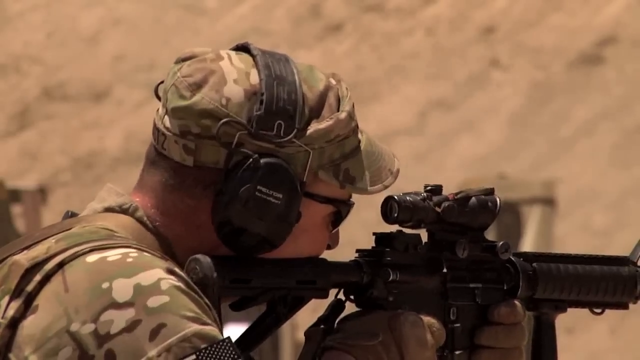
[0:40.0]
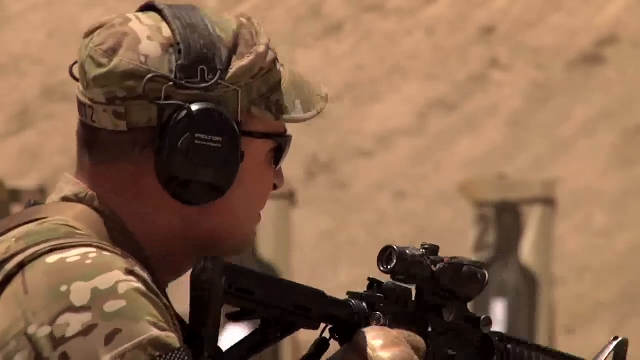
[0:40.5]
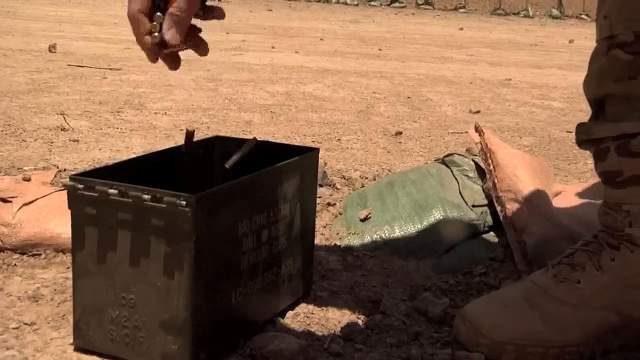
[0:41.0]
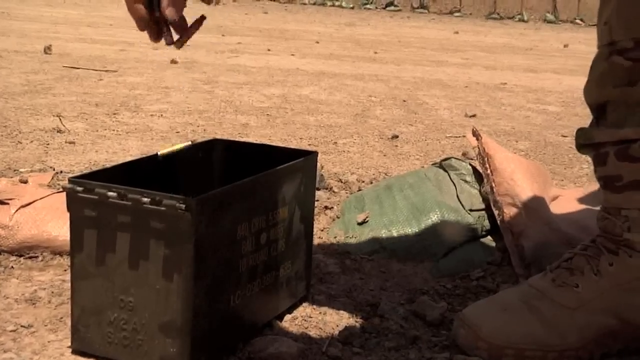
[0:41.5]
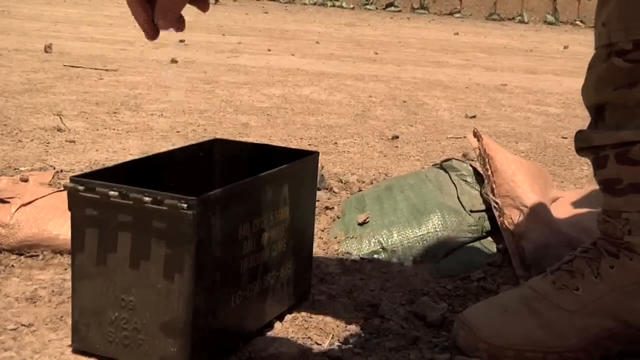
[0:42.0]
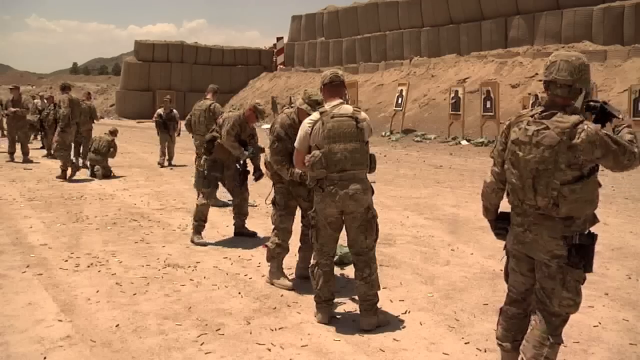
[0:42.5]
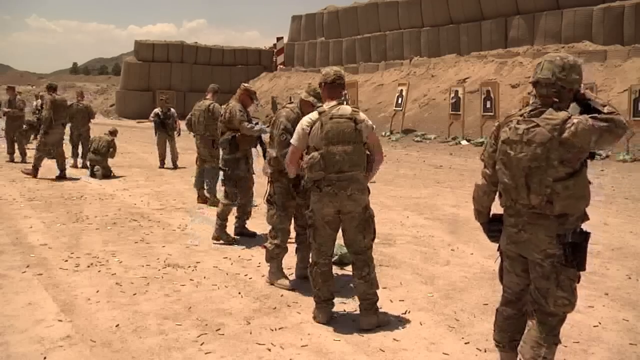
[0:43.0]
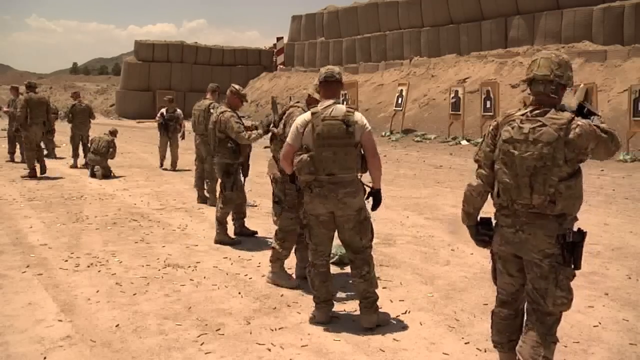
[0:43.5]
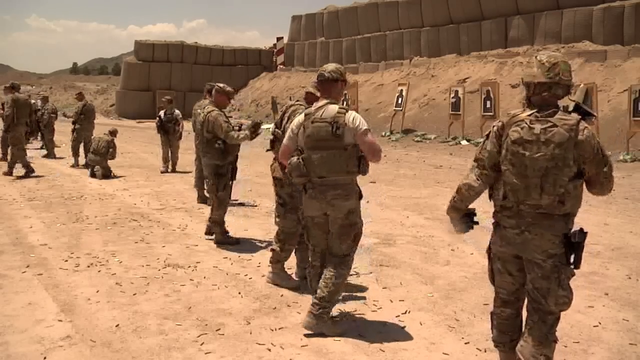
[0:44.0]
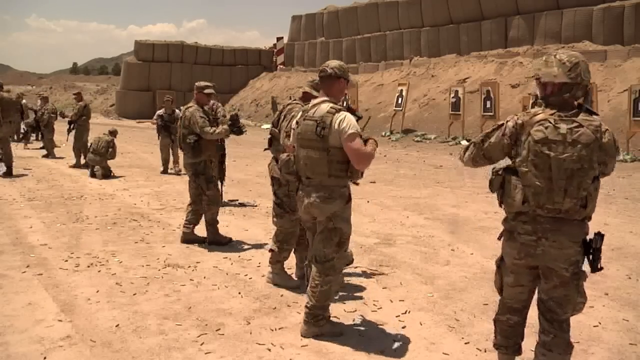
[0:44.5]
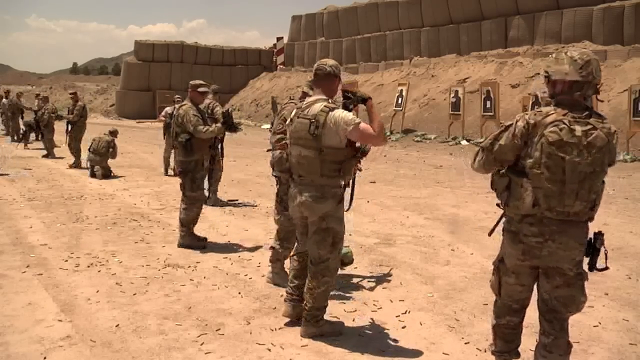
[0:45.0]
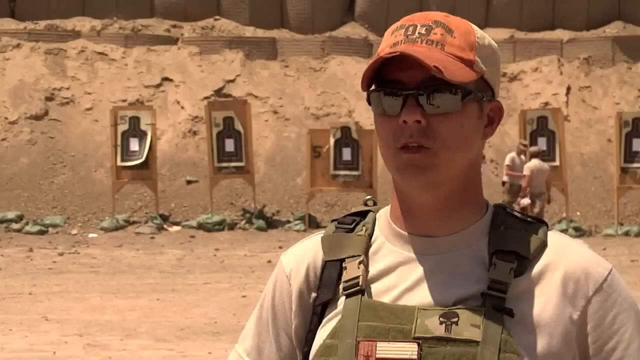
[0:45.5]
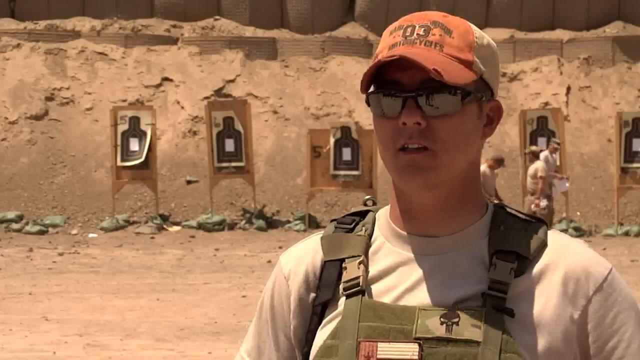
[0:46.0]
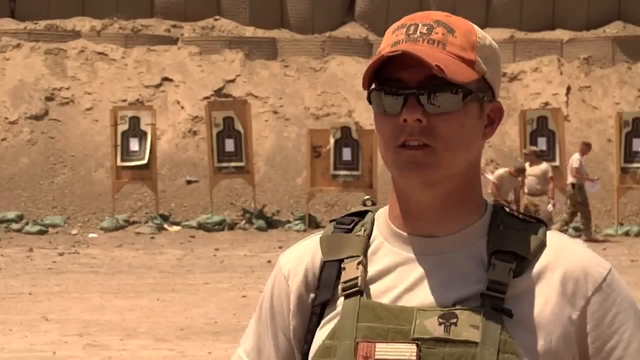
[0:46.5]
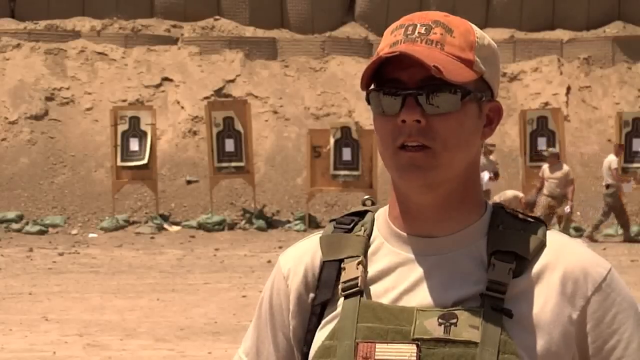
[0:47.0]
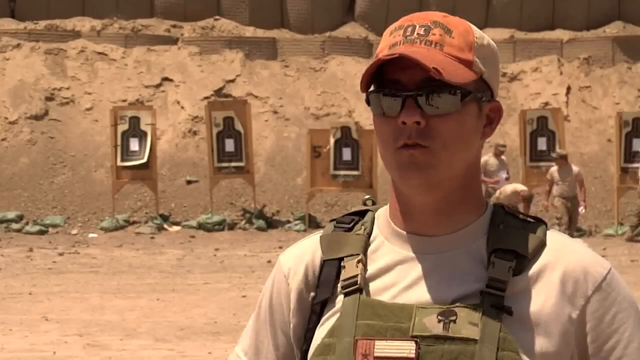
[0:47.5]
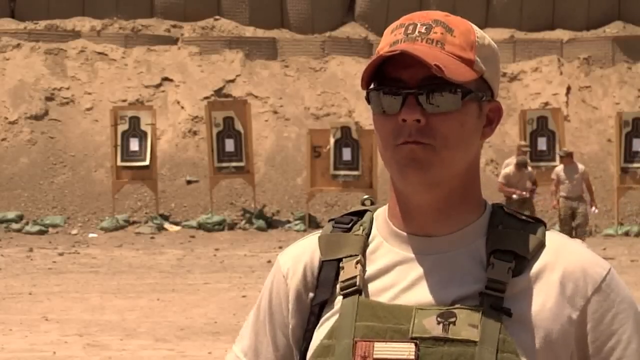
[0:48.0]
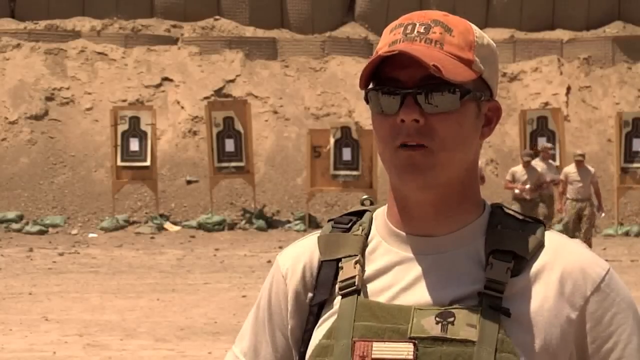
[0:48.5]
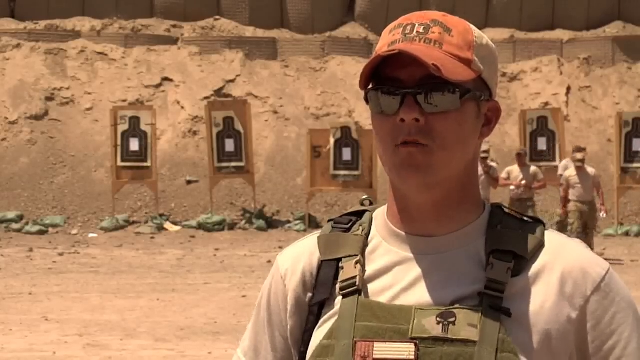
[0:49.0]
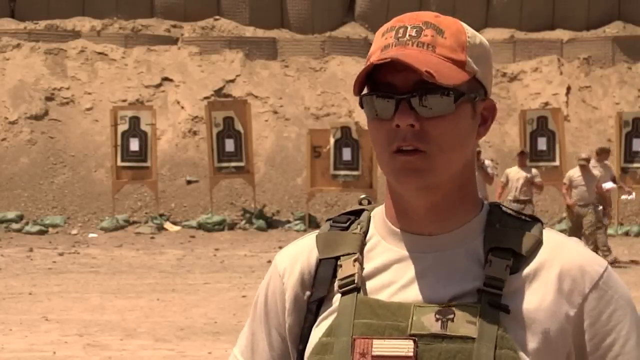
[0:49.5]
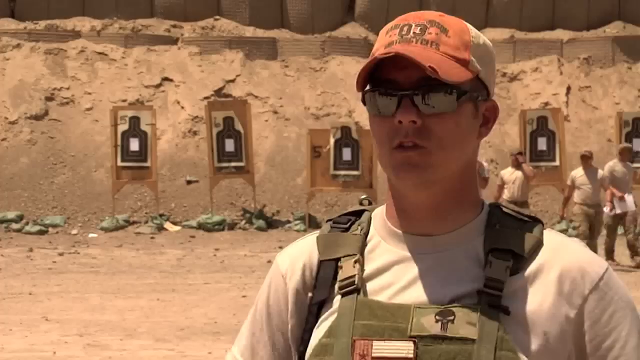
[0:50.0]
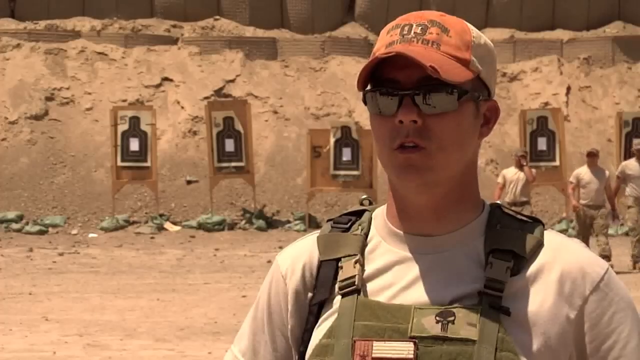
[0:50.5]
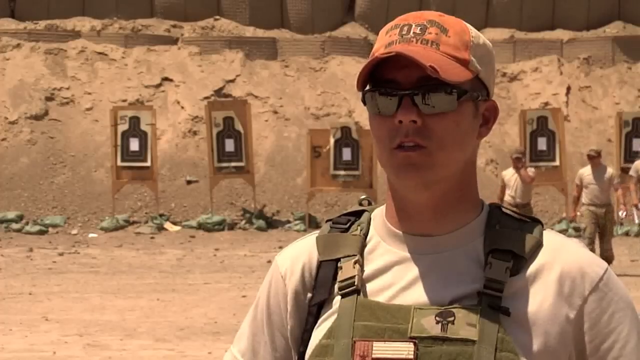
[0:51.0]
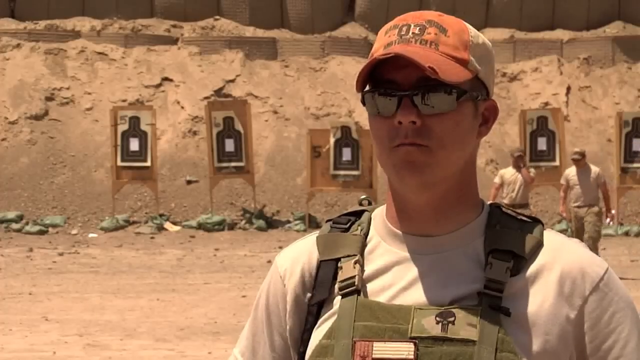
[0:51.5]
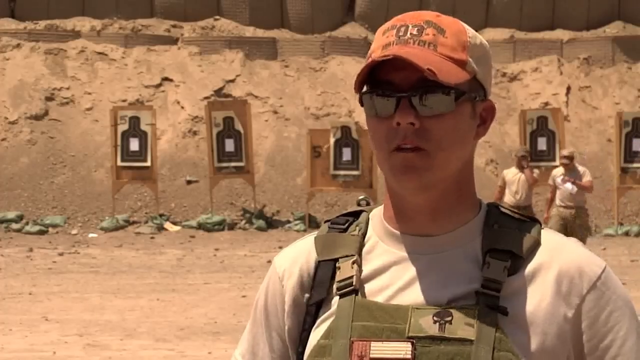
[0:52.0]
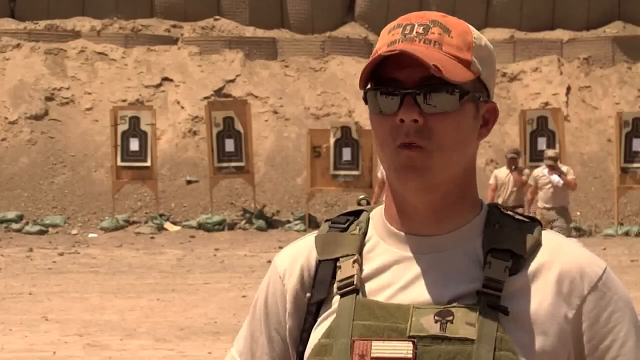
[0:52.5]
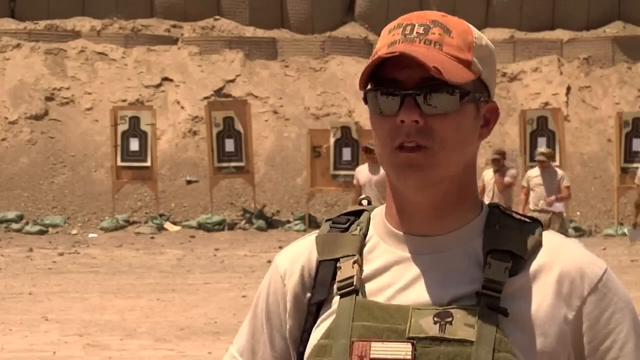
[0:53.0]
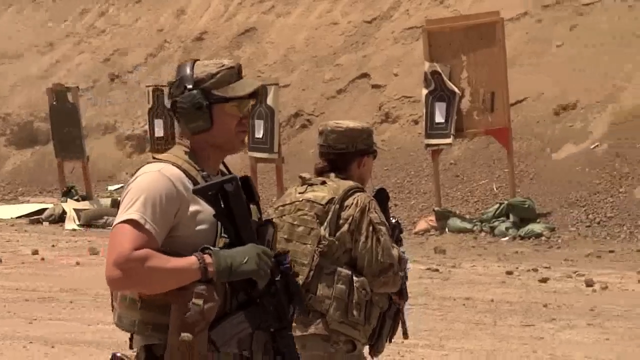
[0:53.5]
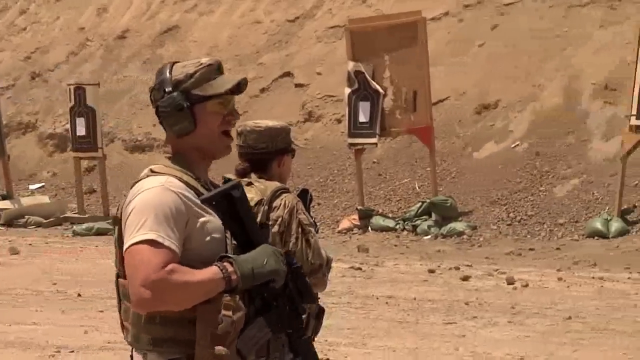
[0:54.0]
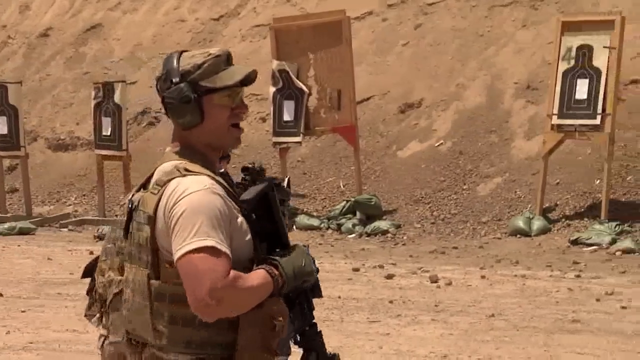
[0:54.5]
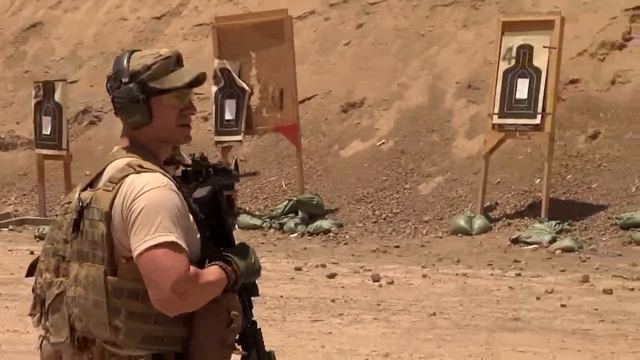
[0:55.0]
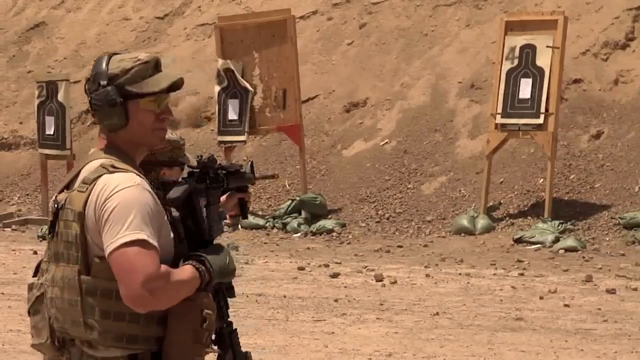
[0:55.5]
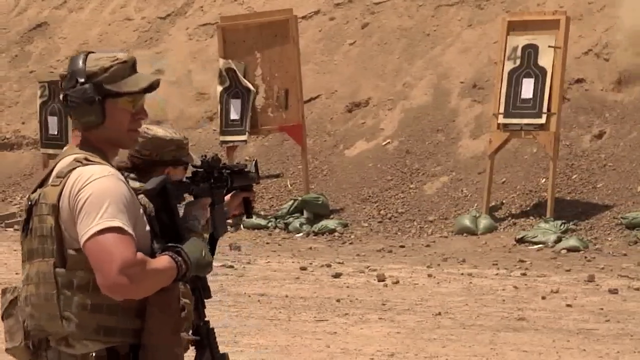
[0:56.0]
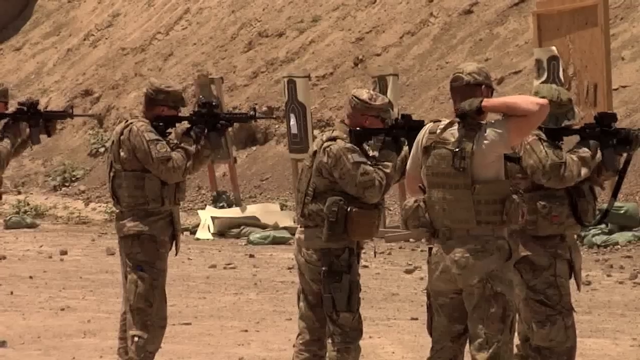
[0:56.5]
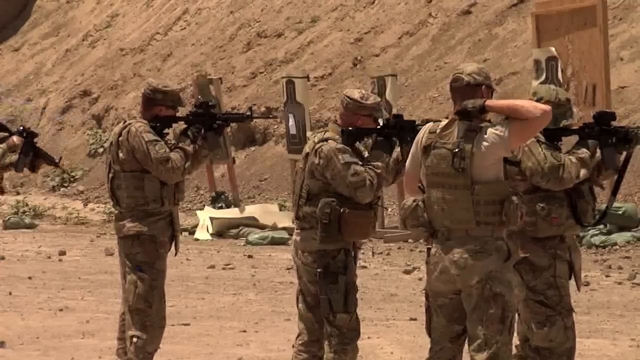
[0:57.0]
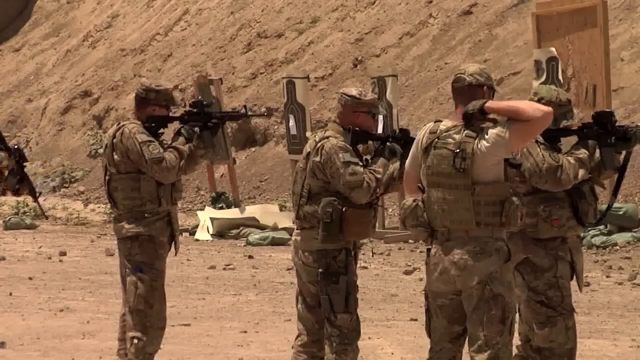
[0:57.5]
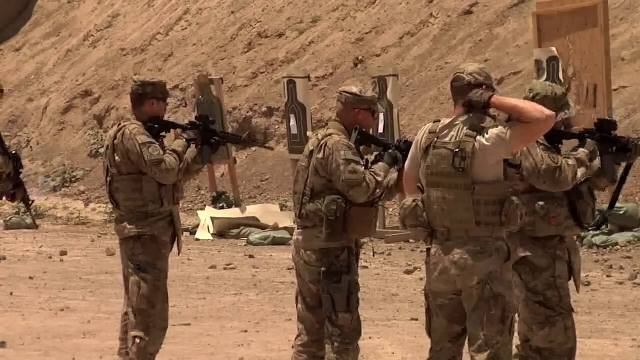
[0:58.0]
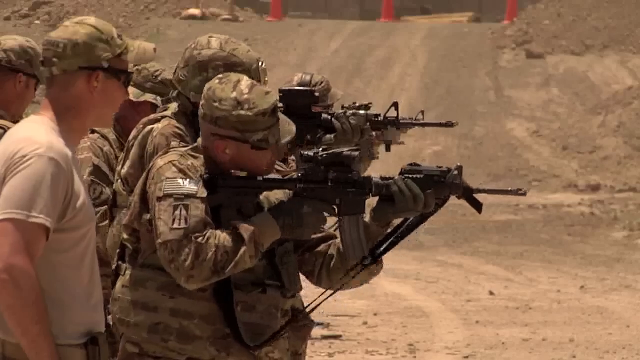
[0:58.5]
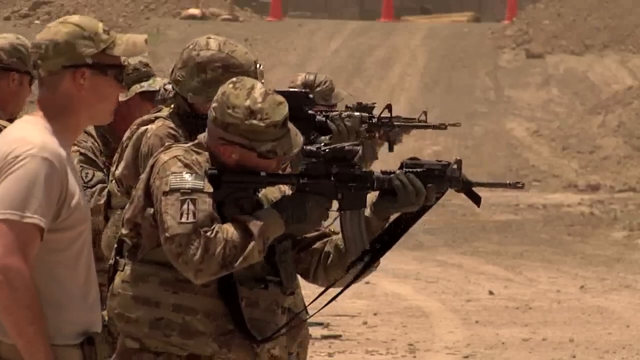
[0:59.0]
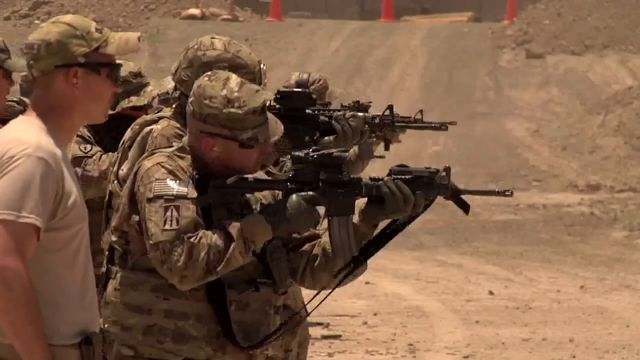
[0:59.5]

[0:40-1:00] The soldiers continue their target practice, and spent bullets are dropped into a large square bin. Another soldier speaks to a reporter; he wears a beige t-shirt without a jacket, sunglasses, and a worn red and beige baseball cap with a faded design on the front. Lots of sandbags lie around, and soldiers walk in the background while taking breaks from target practice. A close-up shows the officer supervising the soldiers as he walks around them, observing them and checking that everything is safe and correct. Some targets with lots of bullet holes have been discarded and lie on the ground, and fresh targets have been placed on the target boards, which look very much like an artist's easel.